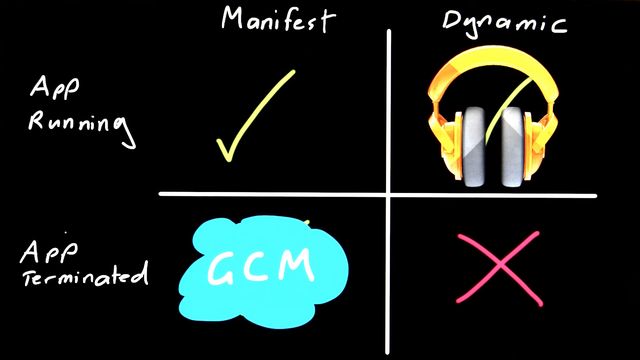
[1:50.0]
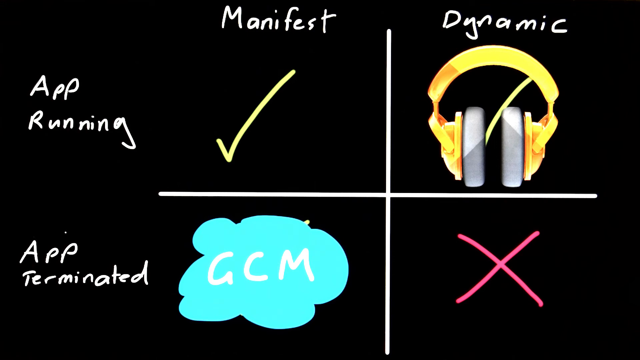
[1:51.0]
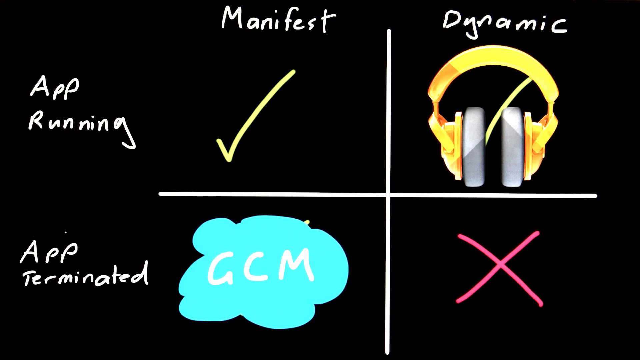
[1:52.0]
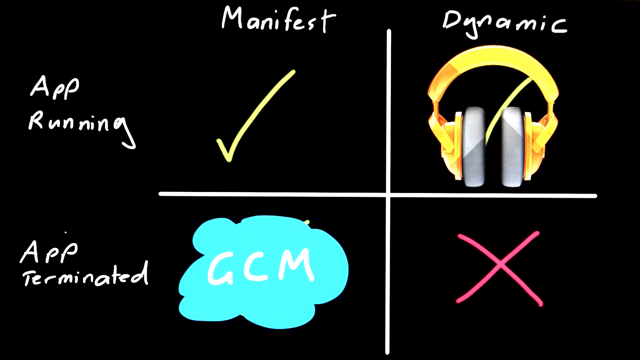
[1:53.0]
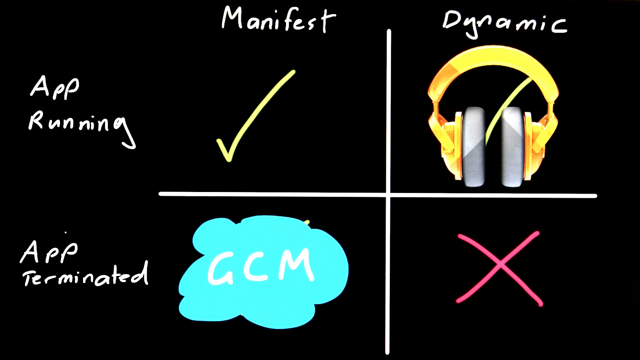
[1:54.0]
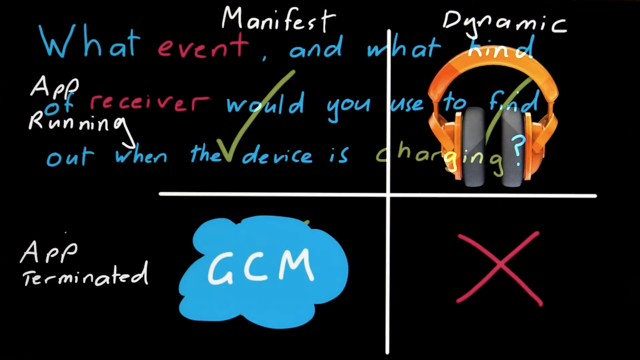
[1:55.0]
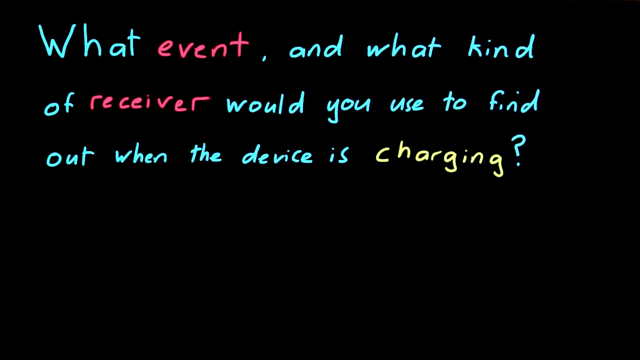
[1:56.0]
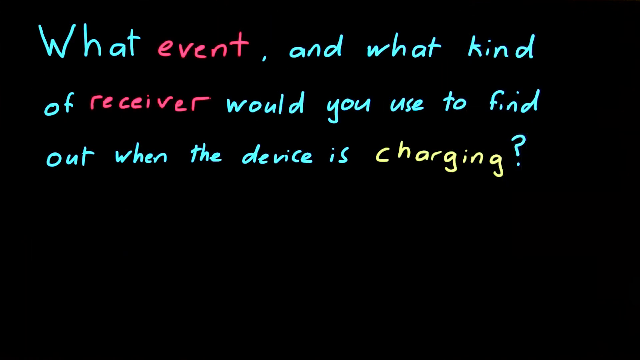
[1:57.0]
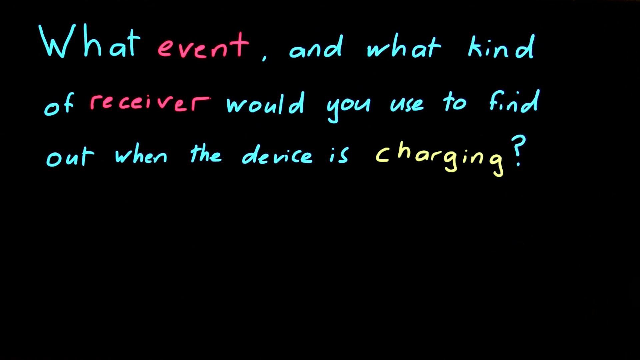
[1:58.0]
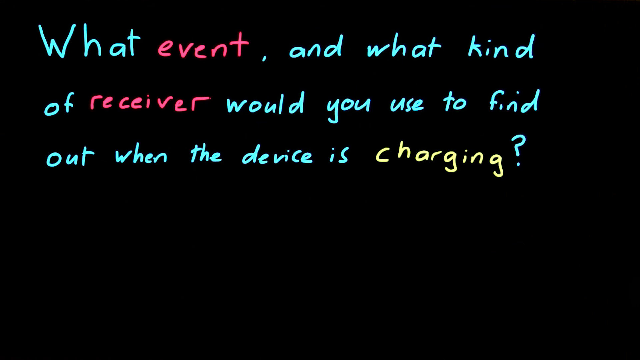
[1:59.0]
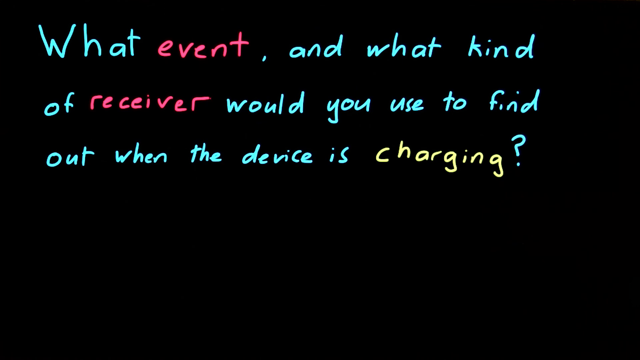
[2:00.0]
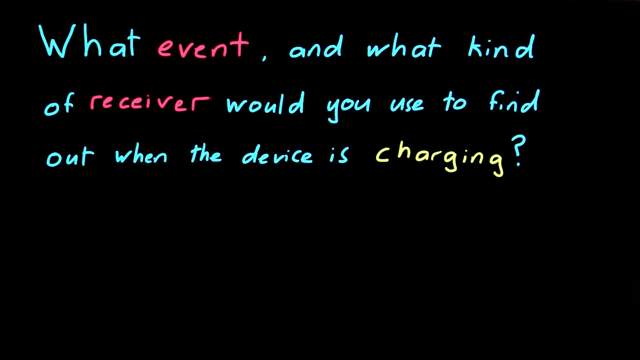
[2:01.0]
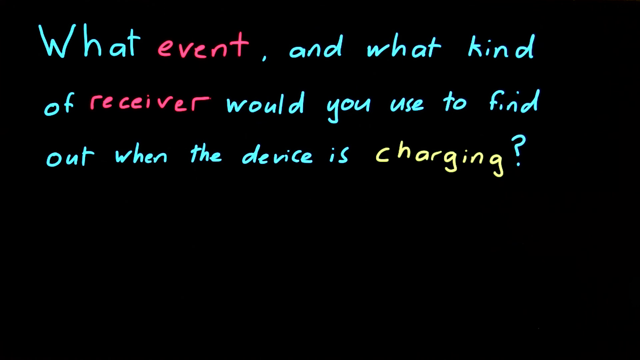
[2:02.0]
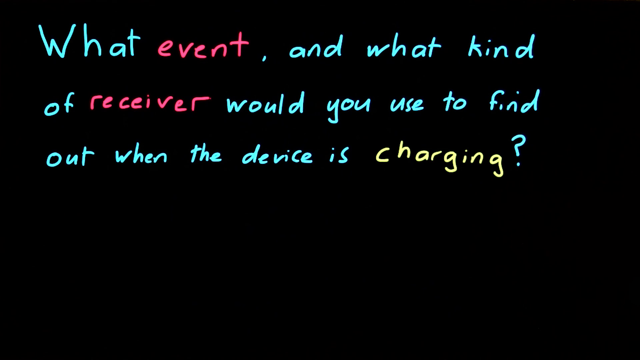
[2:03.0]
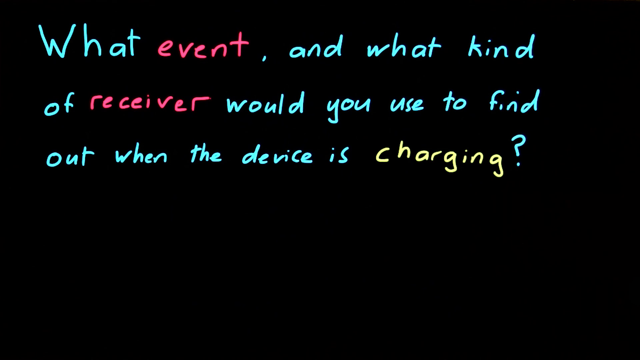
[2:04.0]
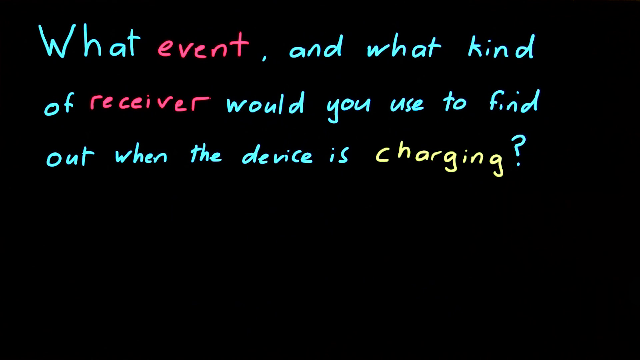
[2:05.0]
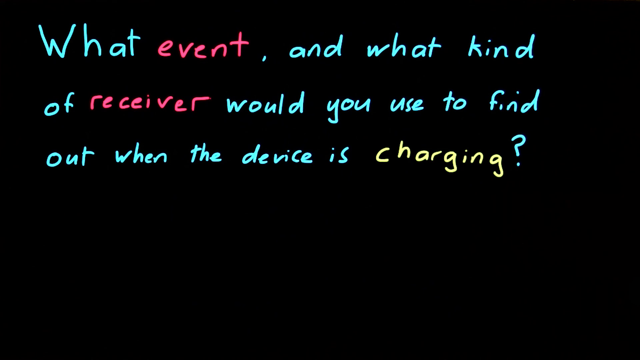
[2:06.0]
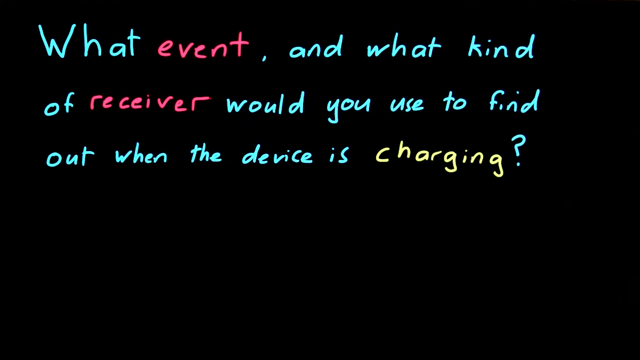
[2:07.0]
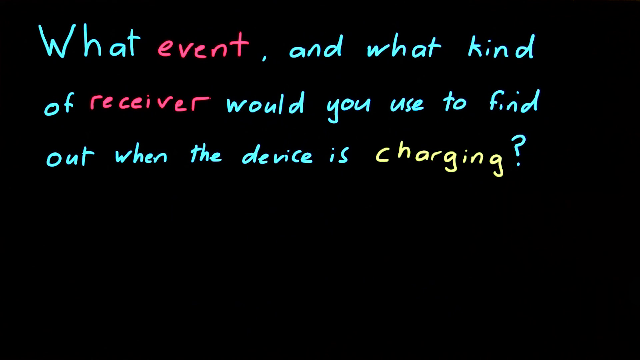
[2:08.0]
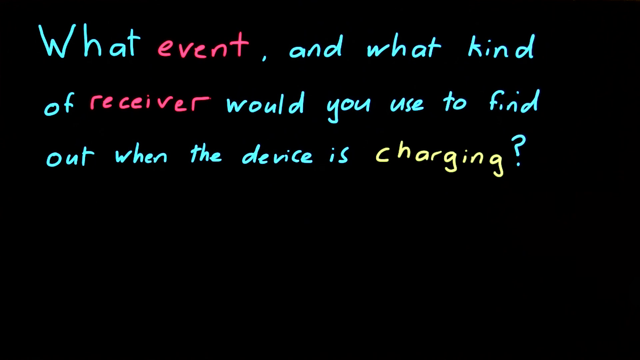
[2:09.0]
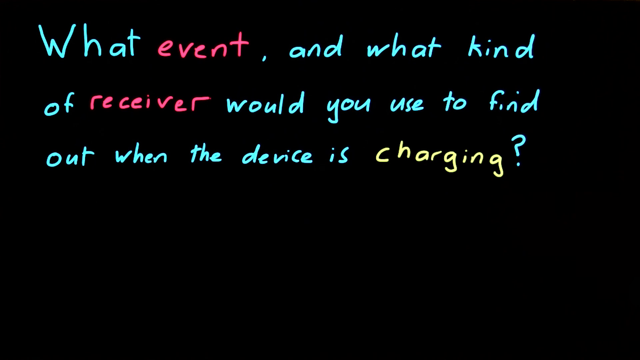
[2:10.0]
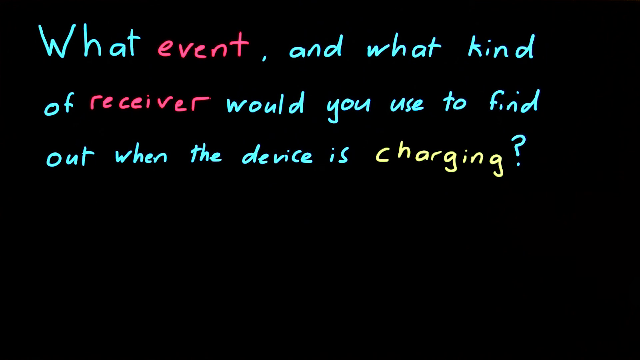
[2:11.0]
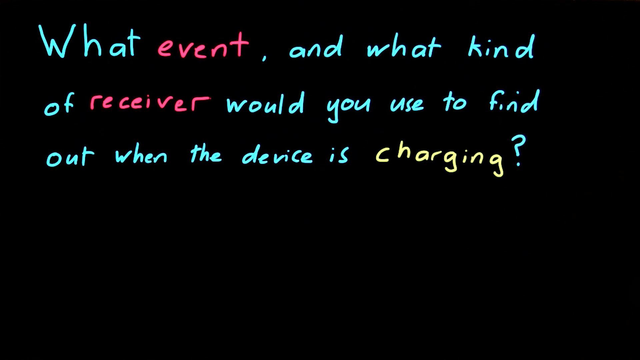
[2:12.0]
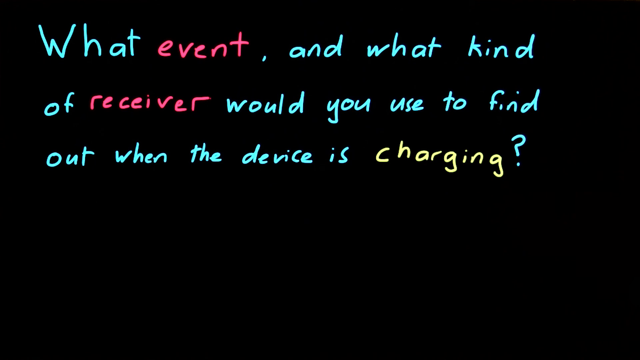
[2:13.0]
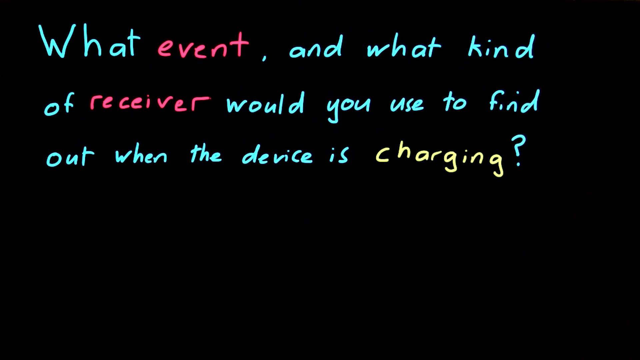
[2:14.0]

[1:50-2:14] Words on the screen read "Manifest" and "Dynamic" across the top and "App Running" and "App Terminated" down the left side. A large drawn cross in the center creates four squares. The upper right box has a checkmark and a pair of headphones in it, and the lower left box also has a green checkmark and a word bubble with the initials "GCM." The video then transitions to another screen with the words "What event and what kind of receiver would you use to find out when the device is charging?" and ends with that question on the screen. The video appears to be someone explaining how to program or maybe code a certain type of app, teaching their process.